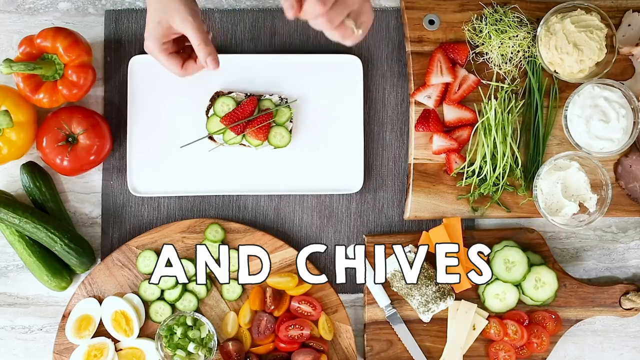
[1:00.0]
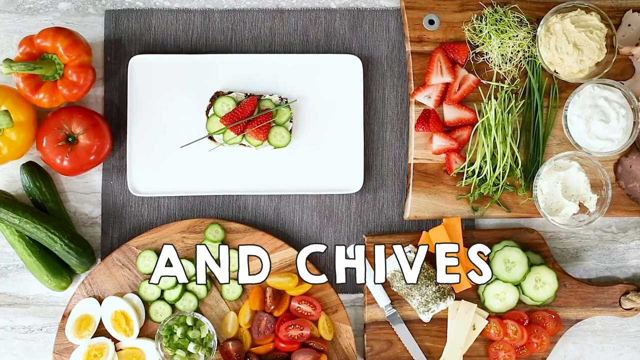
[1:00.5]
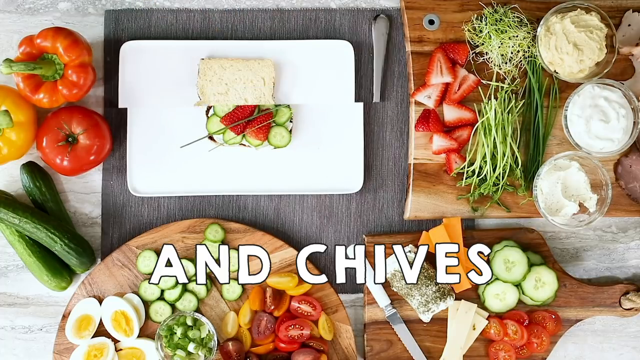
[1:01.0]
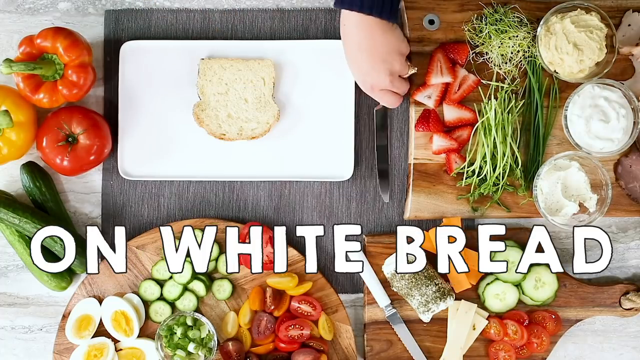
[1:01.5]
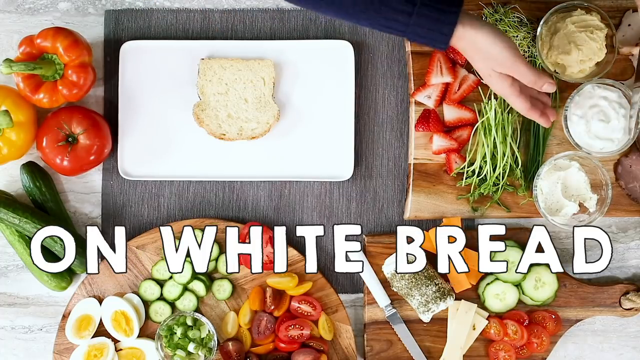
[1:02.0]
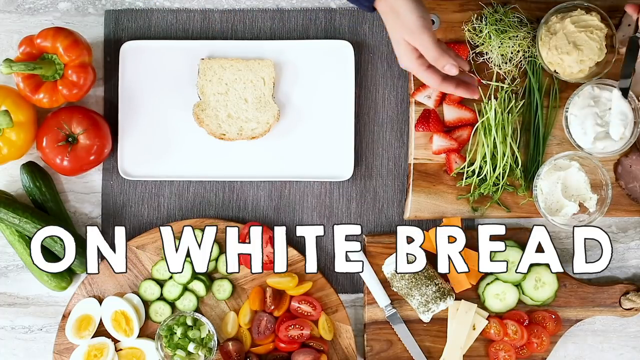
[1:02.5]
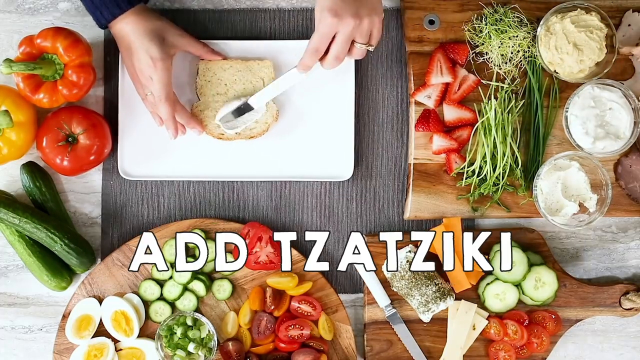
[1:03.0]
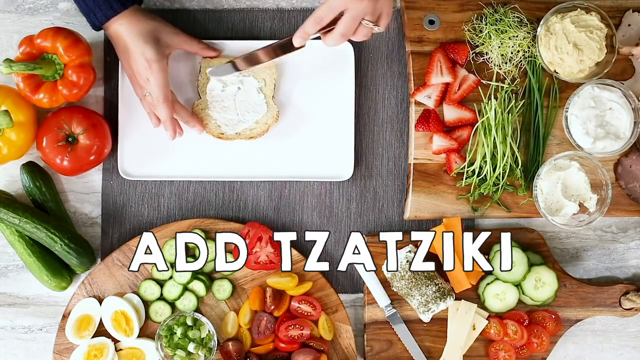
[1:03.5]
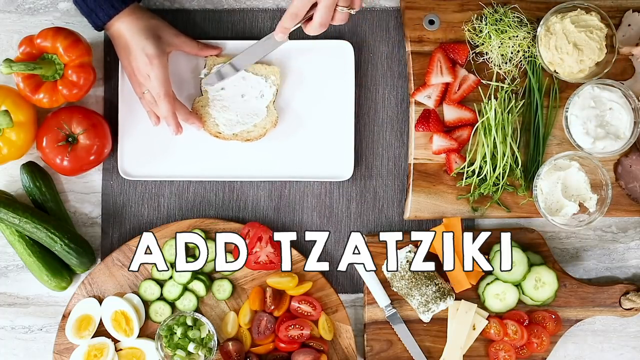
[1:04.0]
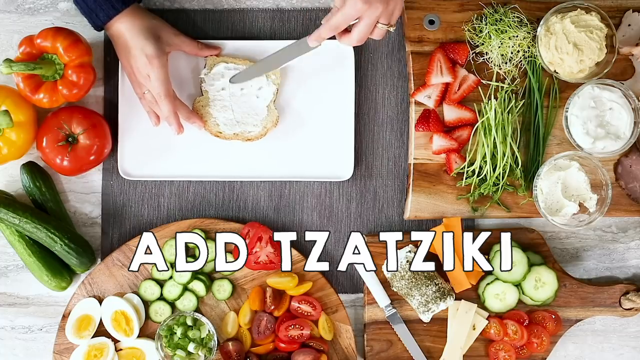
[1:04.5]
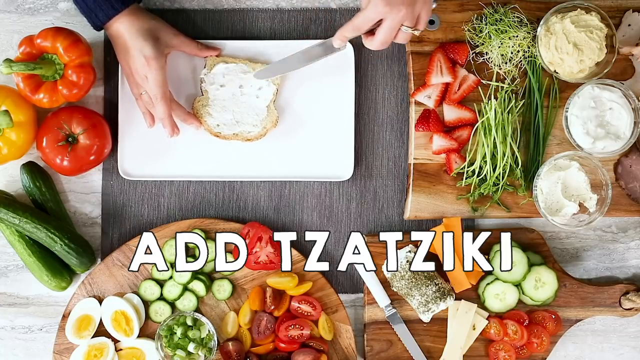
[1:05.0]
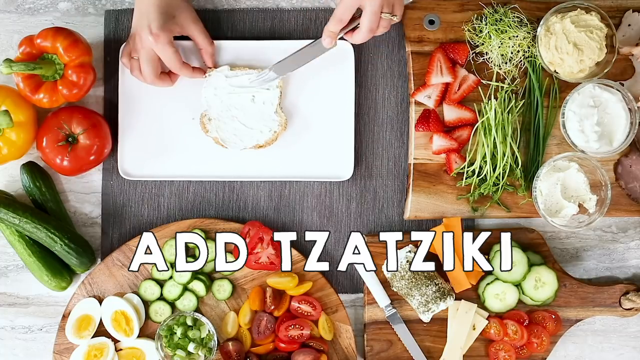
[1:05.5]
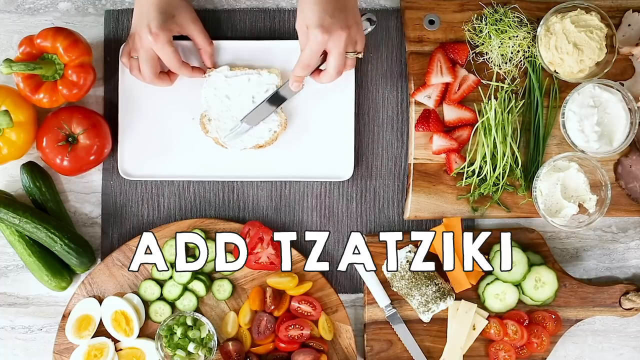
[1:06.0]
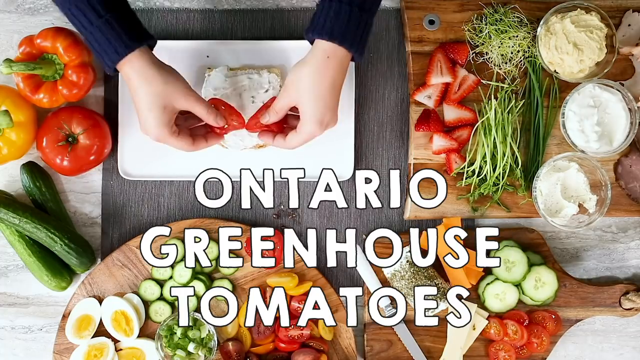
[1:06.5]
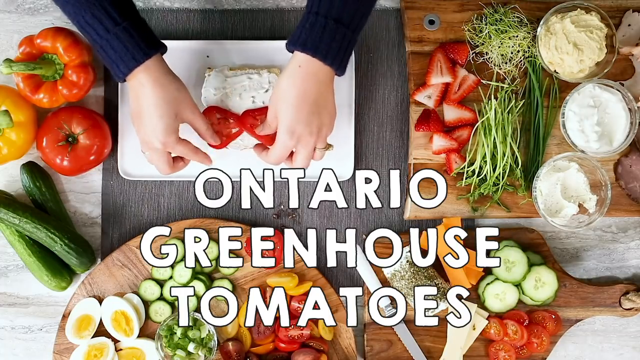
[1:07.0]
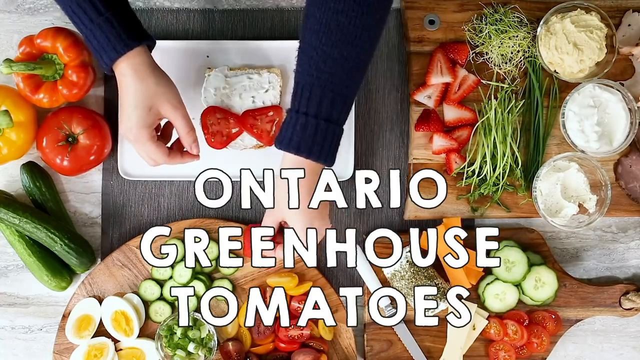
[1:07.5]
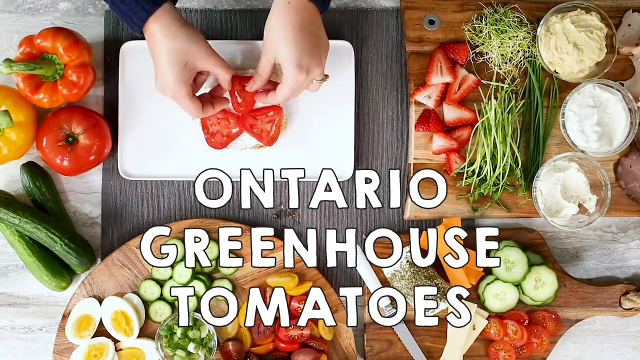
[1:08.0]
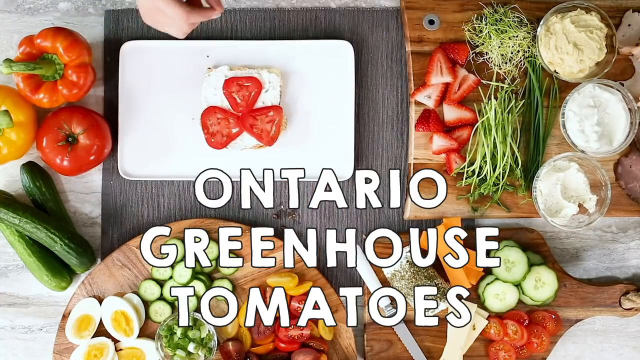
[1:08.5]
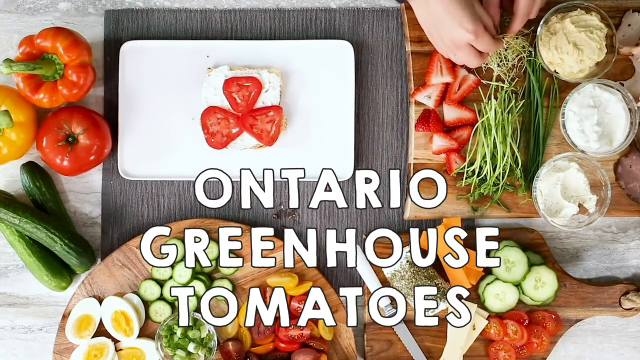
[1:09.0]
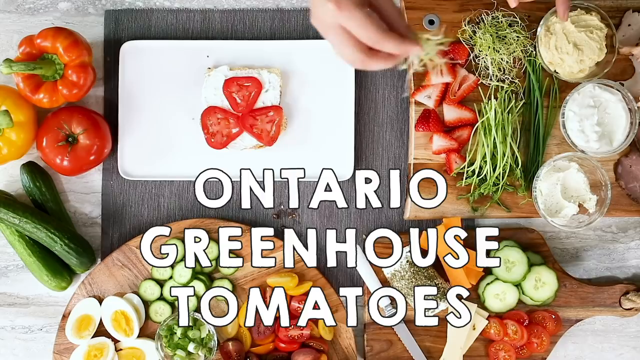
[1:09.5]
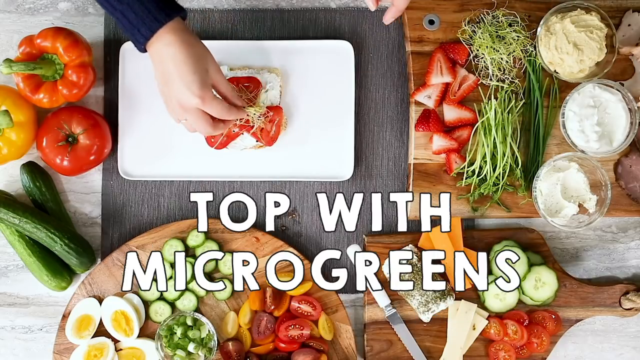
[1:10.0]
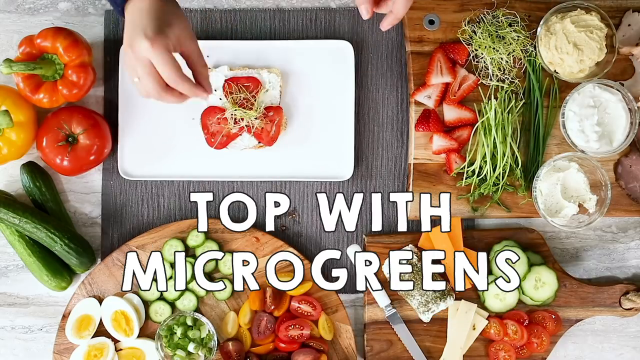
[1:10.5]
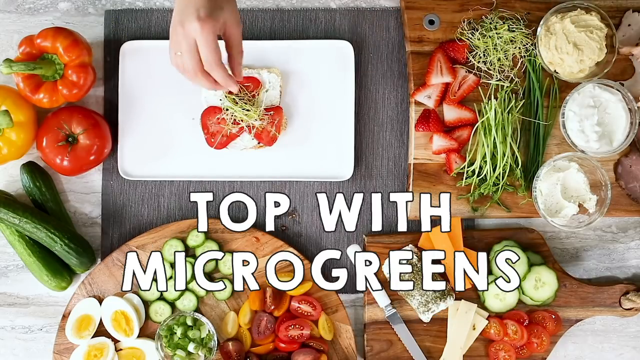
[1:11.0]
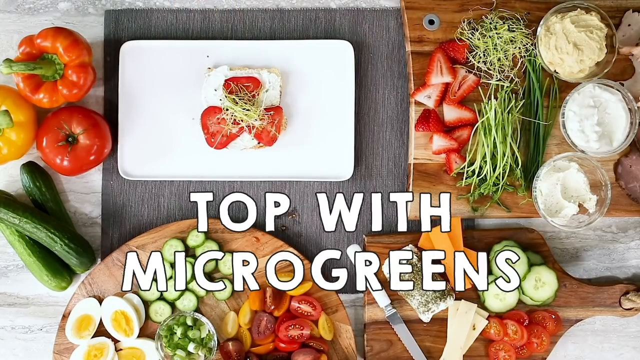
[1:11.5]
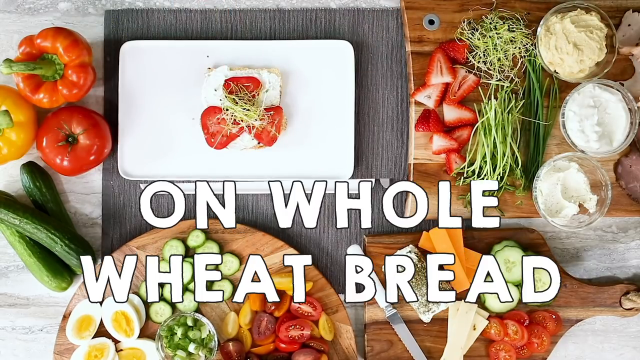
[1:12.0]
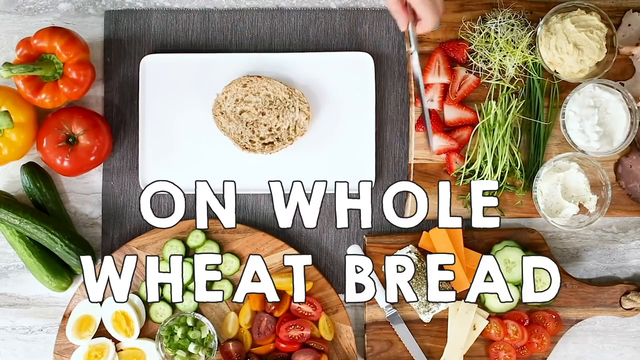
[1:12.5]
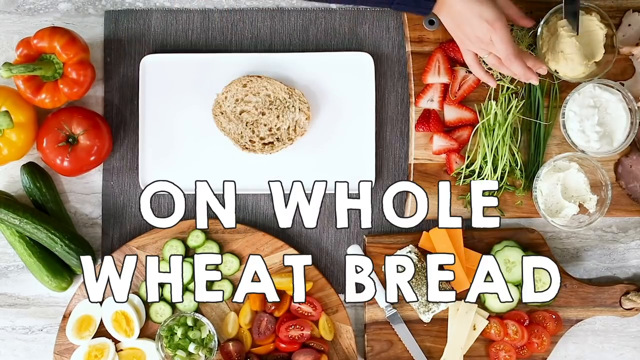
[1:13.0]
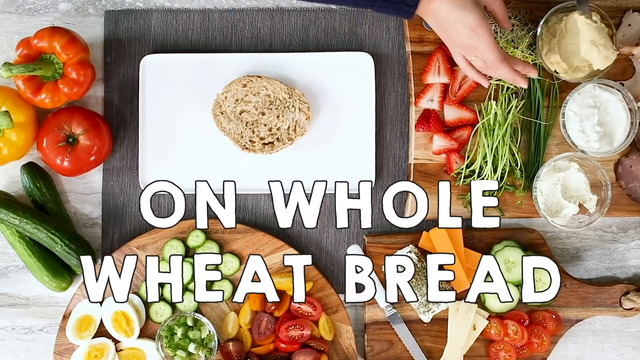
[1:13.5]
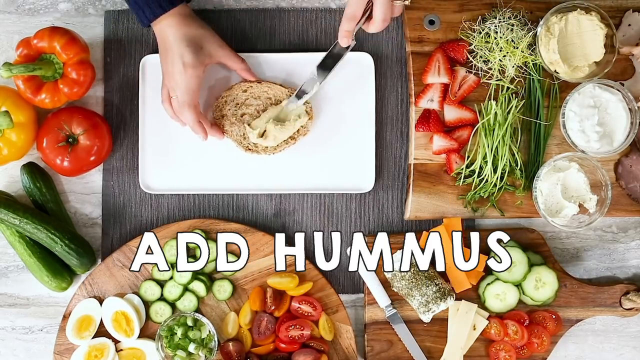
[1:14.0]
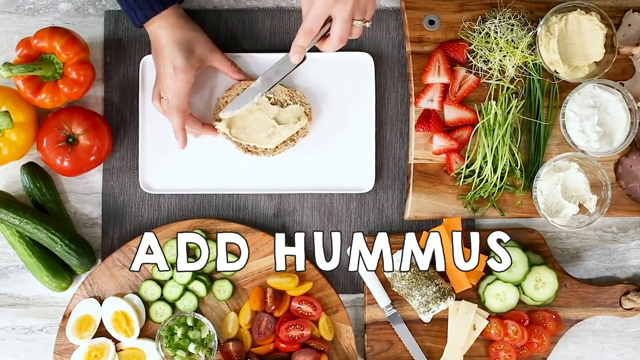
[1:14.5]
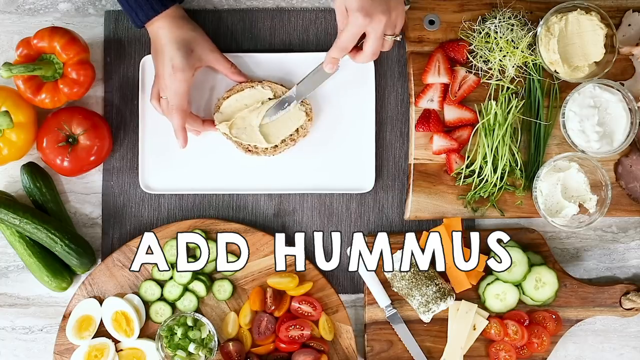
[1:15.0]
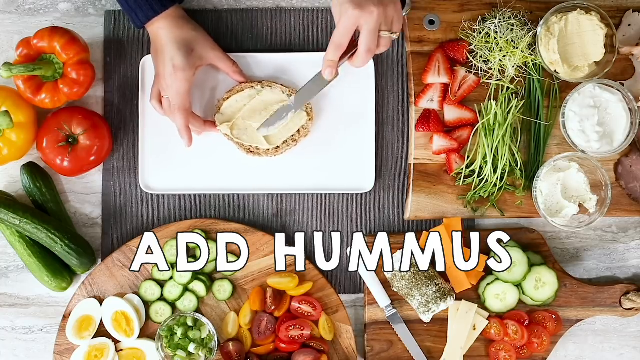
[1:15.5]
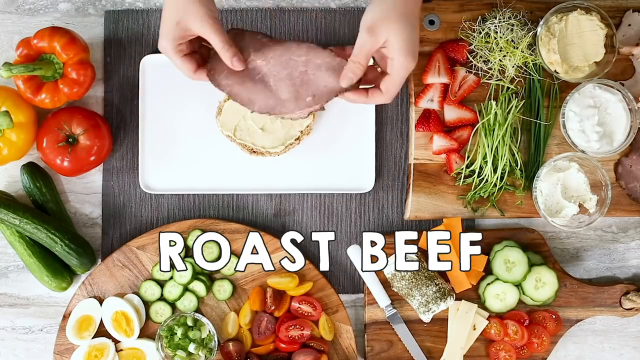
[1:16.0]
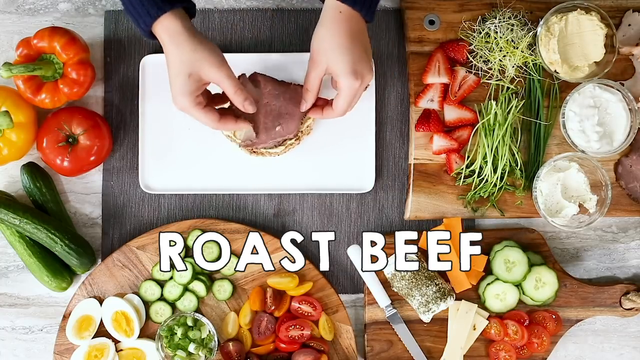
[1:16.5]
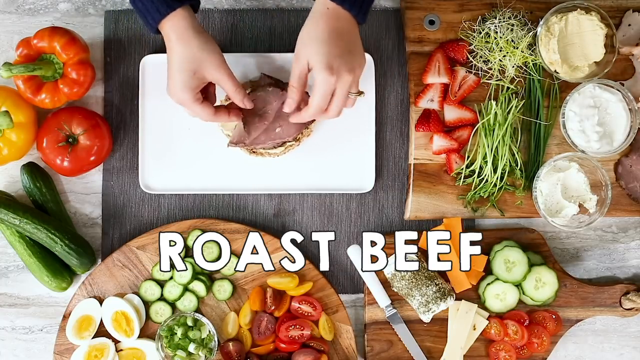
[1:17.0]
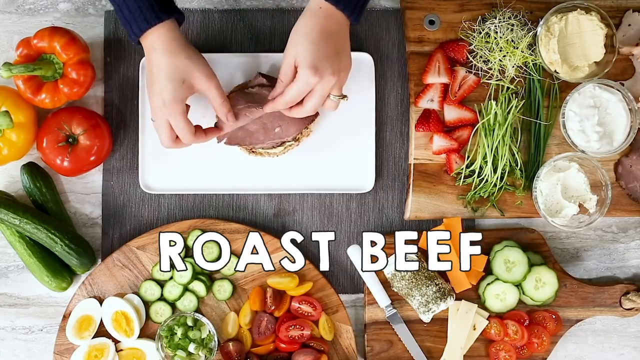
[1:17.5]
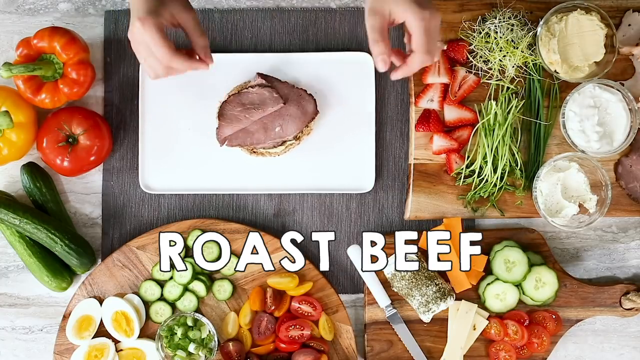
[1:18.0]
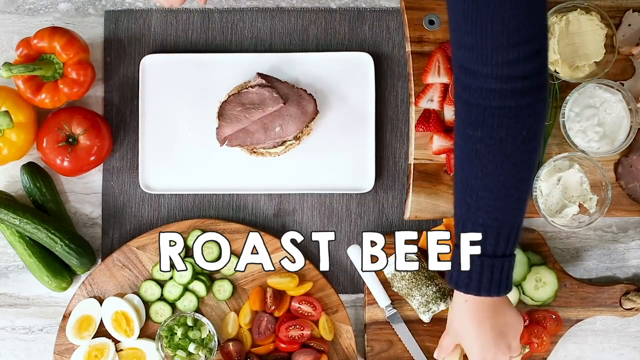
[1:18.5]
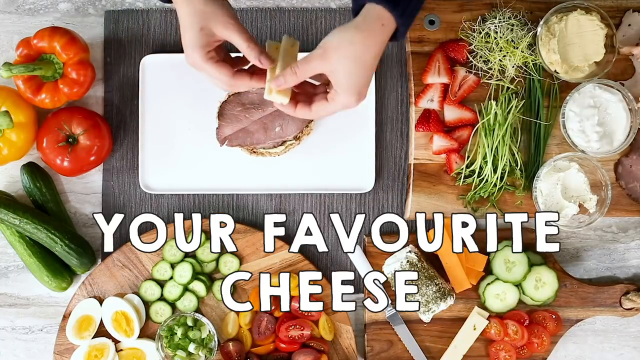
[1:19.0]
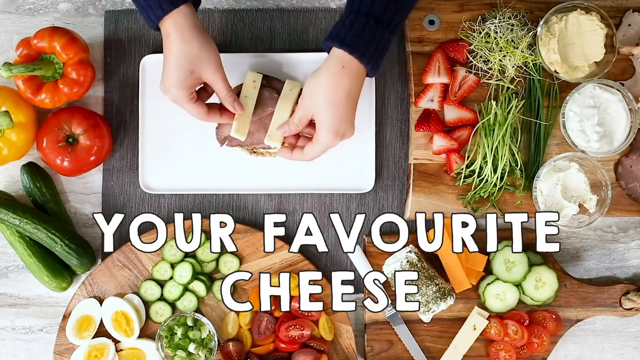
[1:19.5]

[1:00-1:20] After the chives, she adds tzatziki on a white bread, then adds Ontario greenhouse tomatoes, arranging them in a triangular manner, and tops them with micro greens. On the whole wheat bread she adds hummus, then puts roast beef on top of it, arranging it, and then applies your favorite cheese on top. Whole fruits are on the left side, and the chopped ones being used are on the right side.